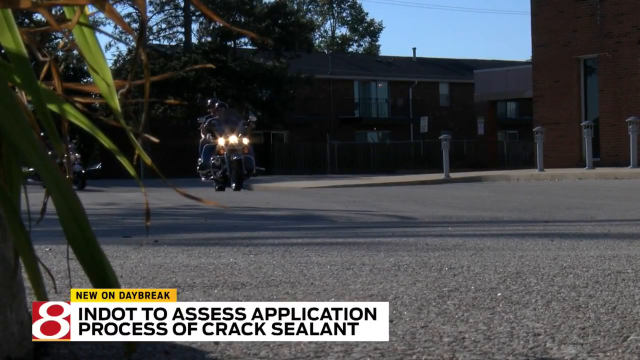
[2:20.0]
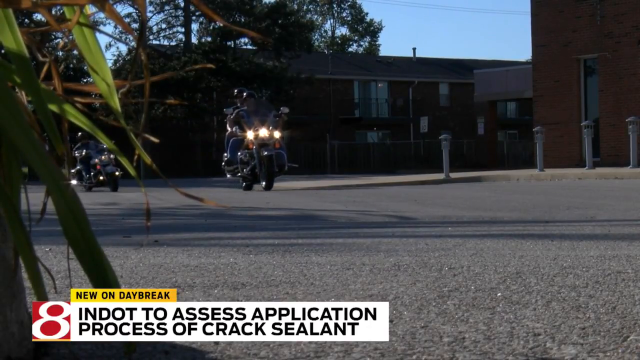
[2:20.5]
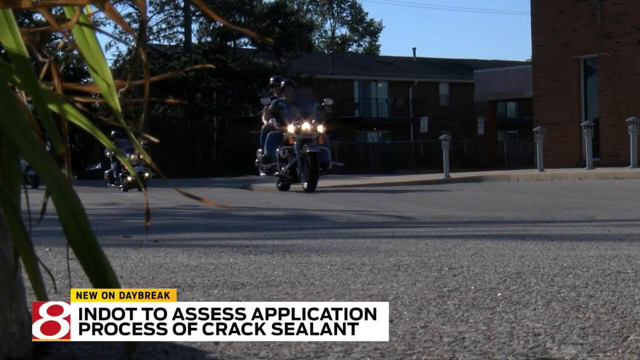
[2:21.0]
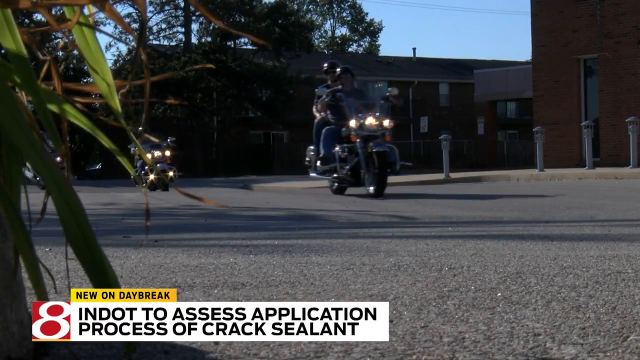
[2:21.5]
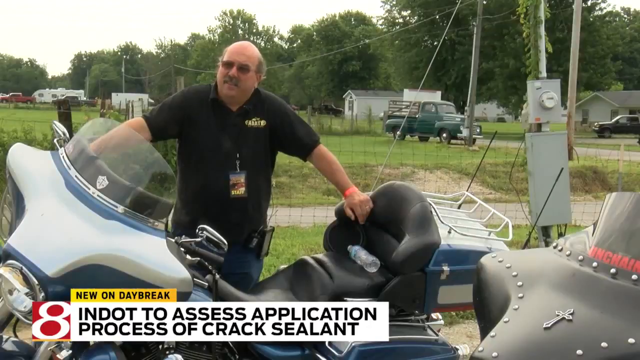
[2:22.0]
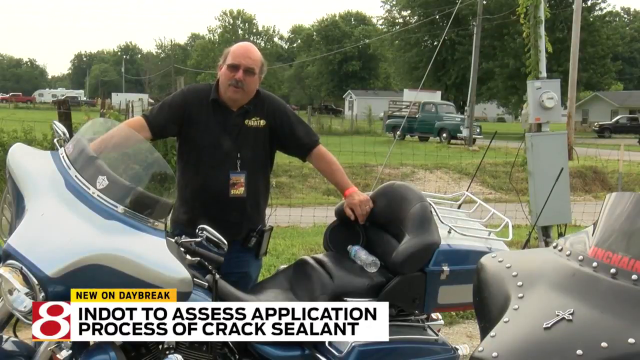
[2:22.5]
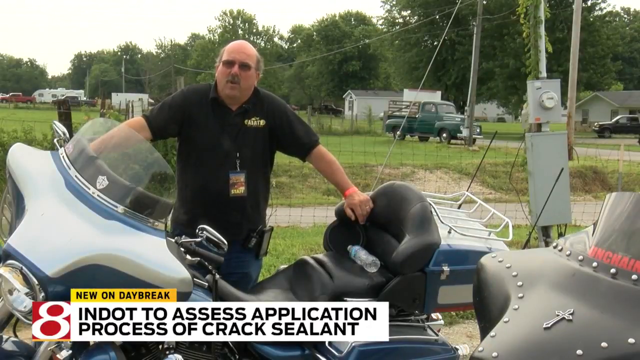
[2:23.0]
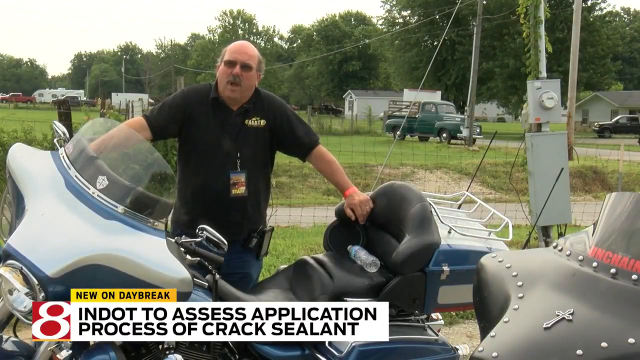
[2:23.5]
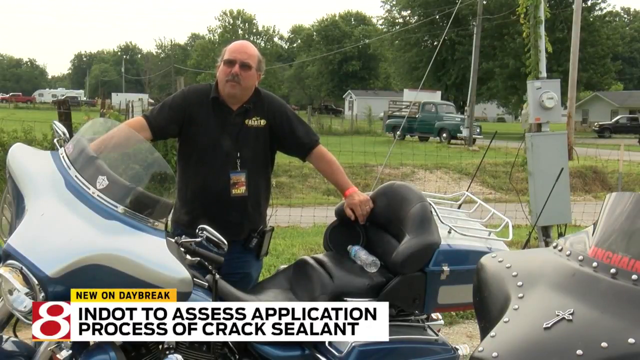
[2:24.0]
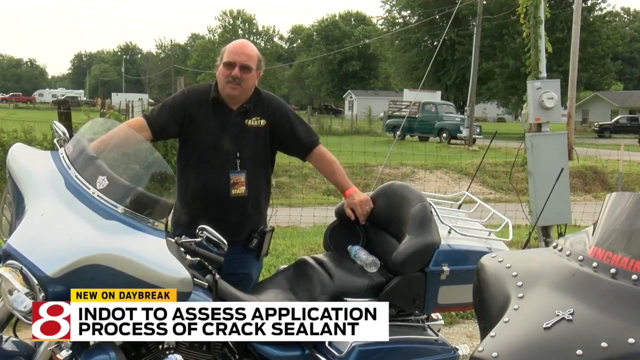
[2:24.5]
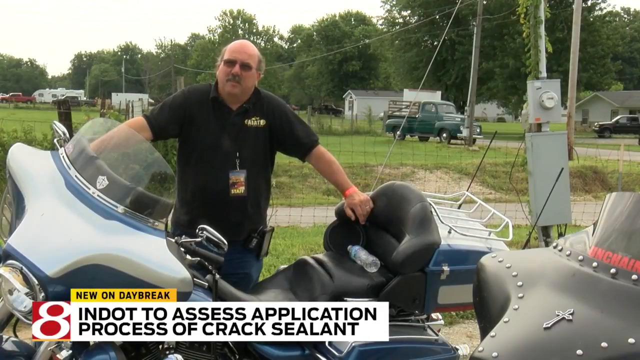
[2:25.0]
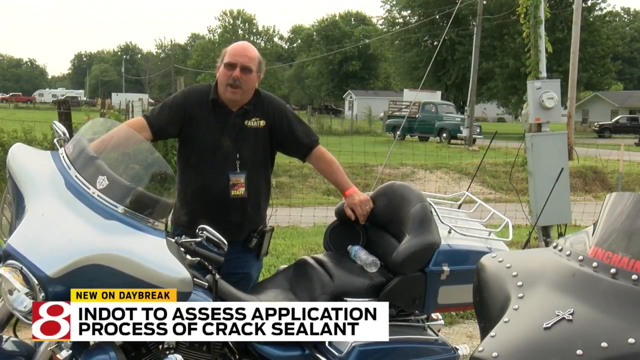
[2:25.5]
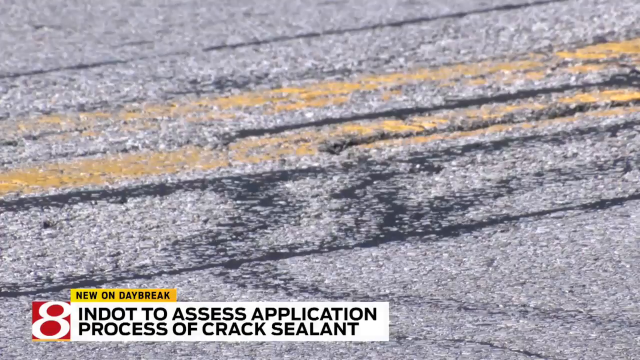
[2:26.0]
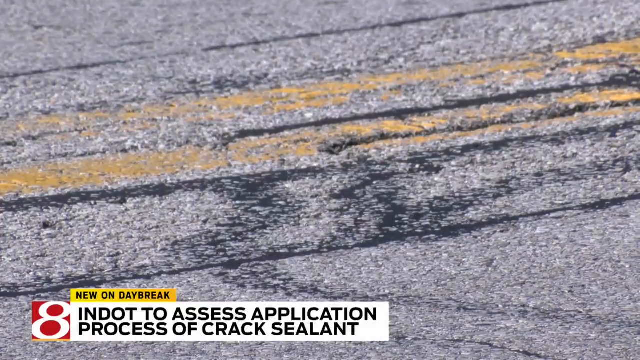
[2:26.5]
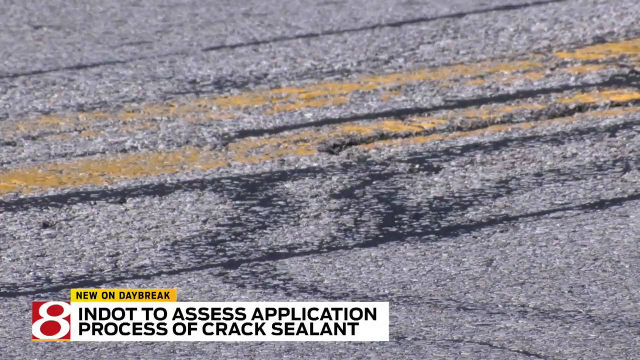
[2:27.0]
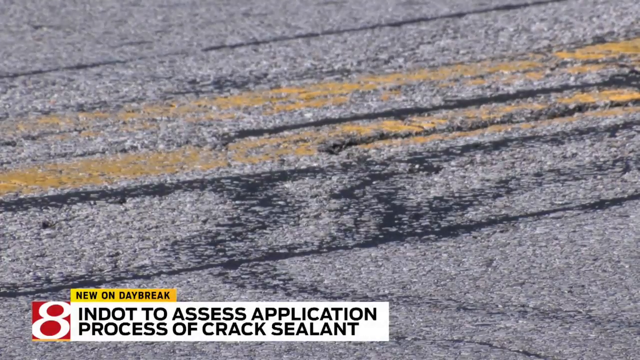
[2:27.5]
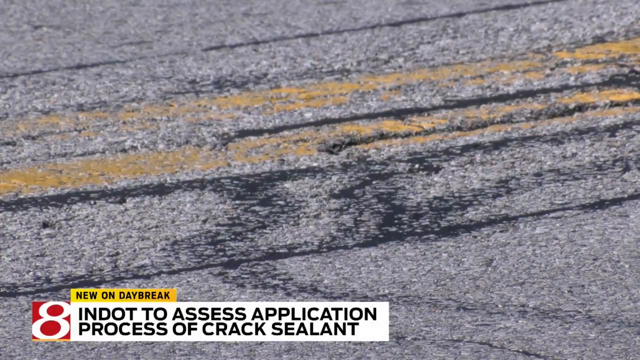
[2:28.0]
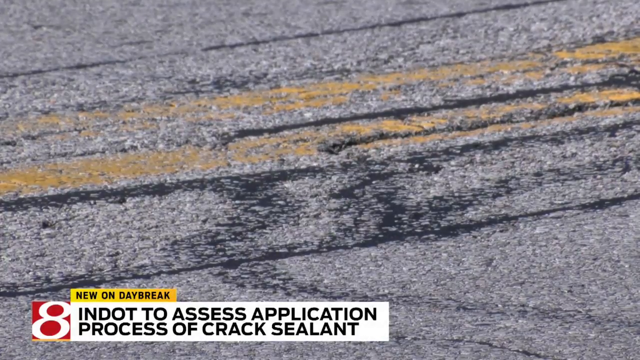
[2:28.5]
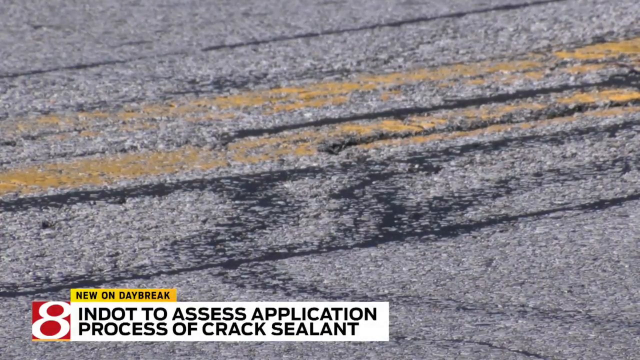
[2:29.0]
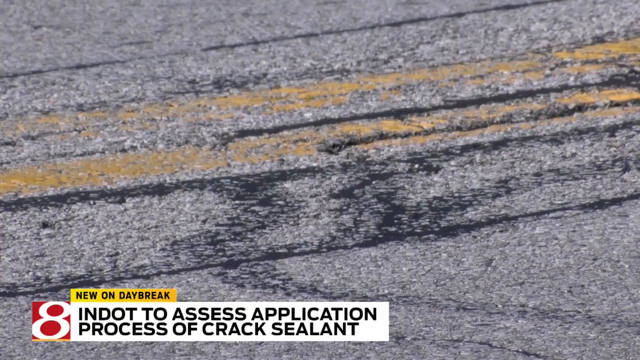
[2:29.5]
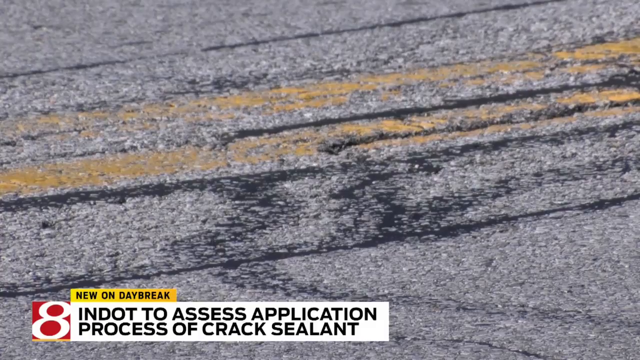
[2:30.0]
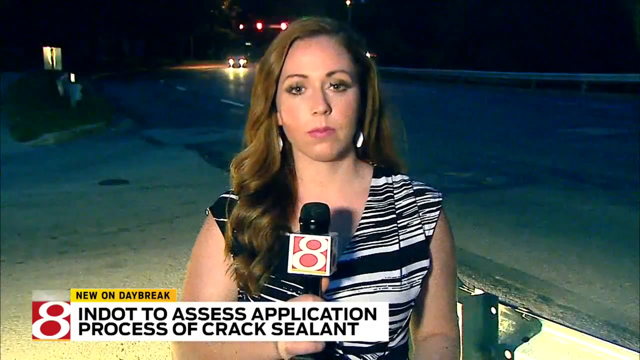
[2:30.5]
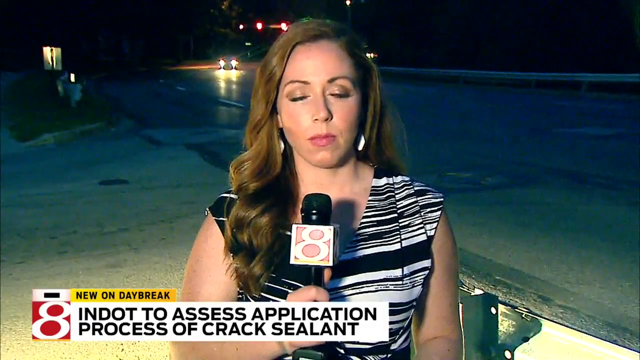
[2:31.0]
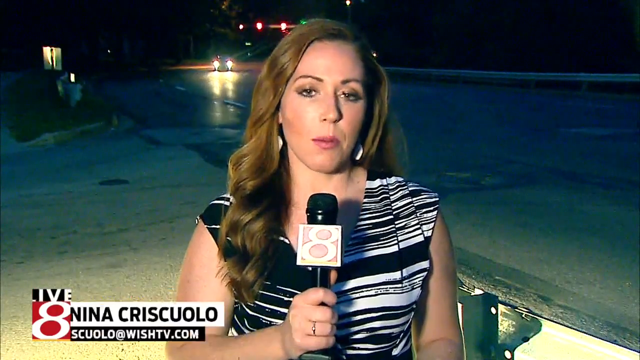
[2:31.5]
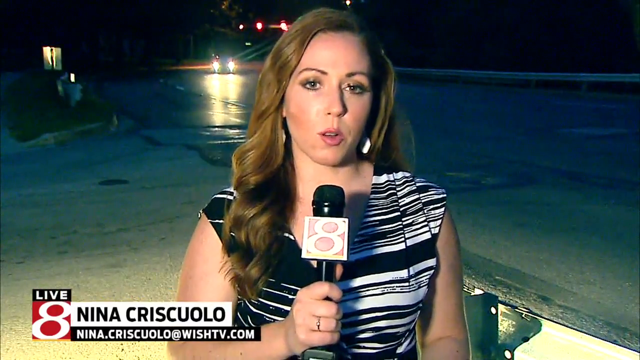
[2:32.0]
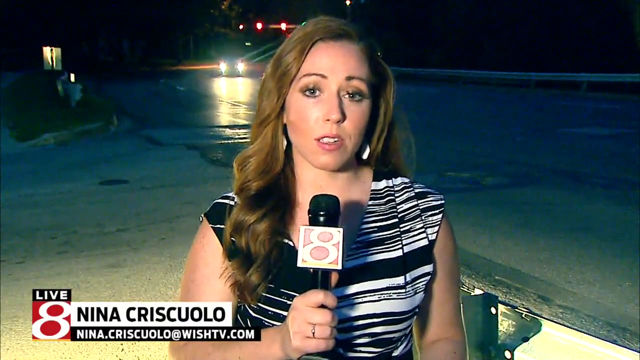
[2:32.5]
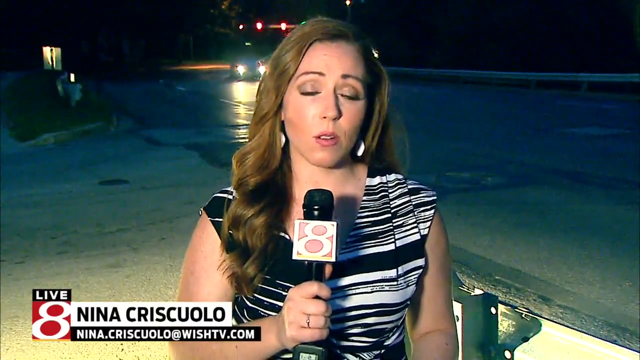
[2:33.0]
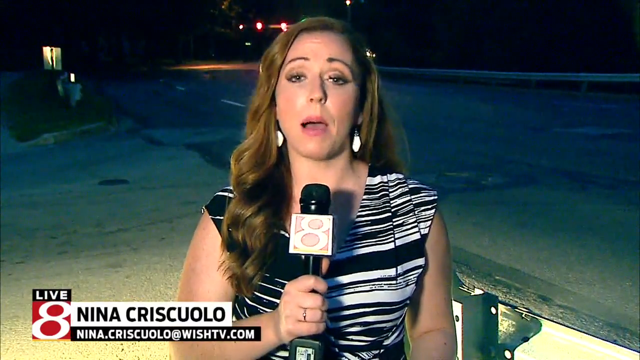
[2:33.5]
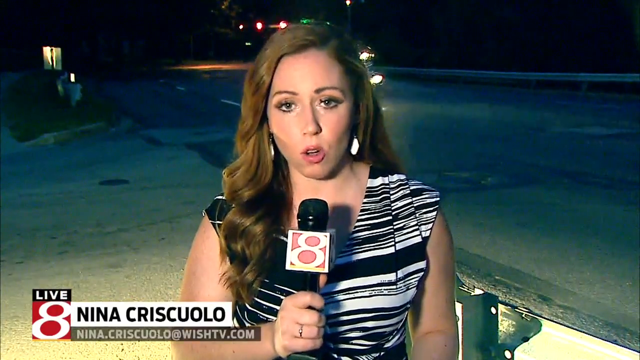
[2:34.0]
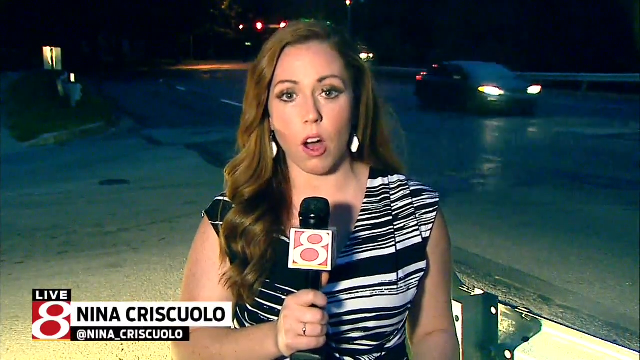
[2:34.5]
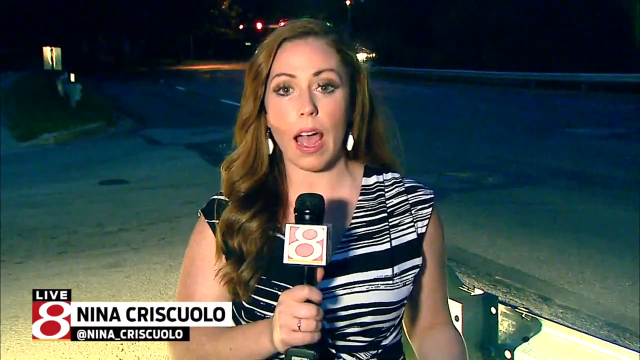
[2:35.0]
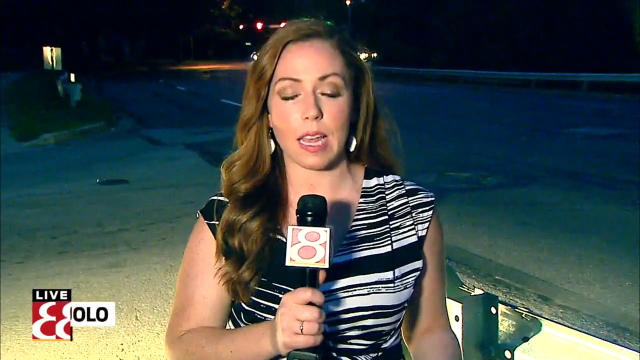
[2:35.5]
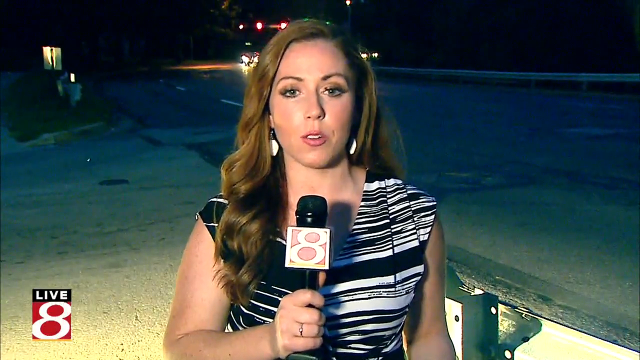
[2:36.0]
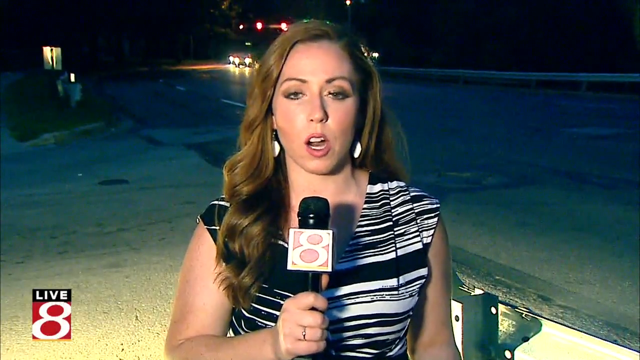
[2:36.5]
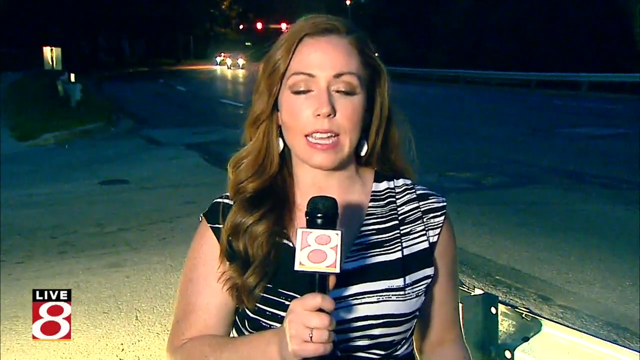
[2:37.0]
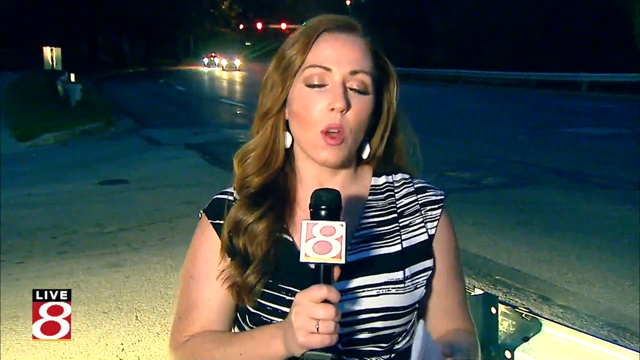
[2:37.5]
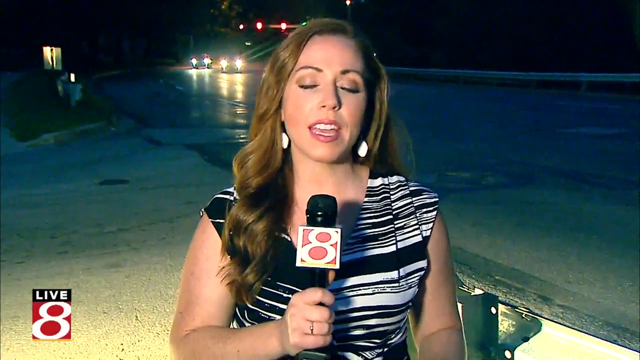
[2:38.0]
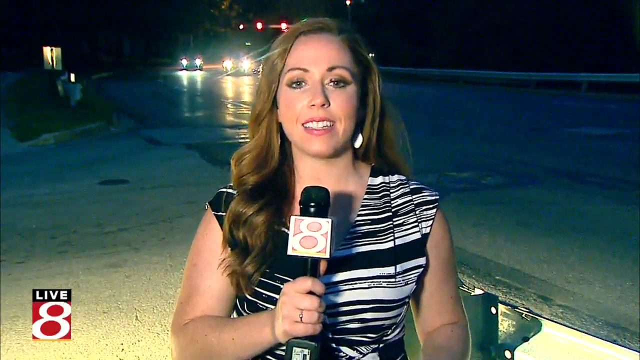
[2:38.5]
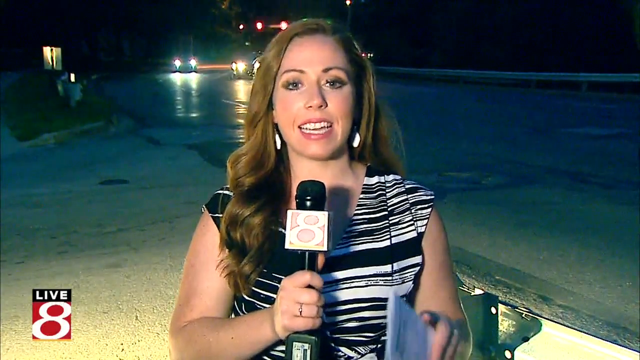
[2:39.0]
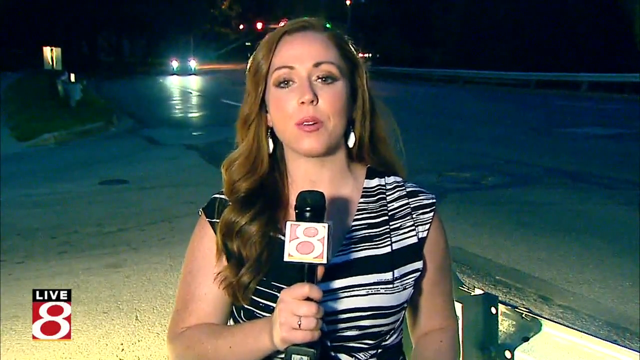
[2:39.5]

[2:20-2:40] News Channel 8 in Indiana is live on location with the text "new on daybreak, in dot to access application process of cracked sealant." Several motorcycles come across streets covered with excess black sealant that they have to drive over and apparently have an issue with. A man leans over his bike and speaks to the camera. A close-up shows the excess sealant in the streets. The report returns to the newscaster, Nina Crisculo, a brunette in her late 20s, whose email address is nina.crisculo@wishtv.com, as she finishes the newscast.